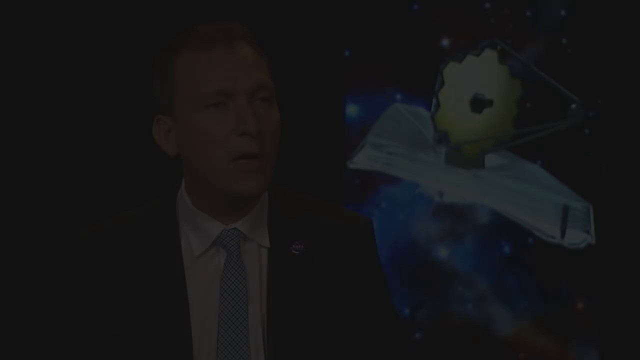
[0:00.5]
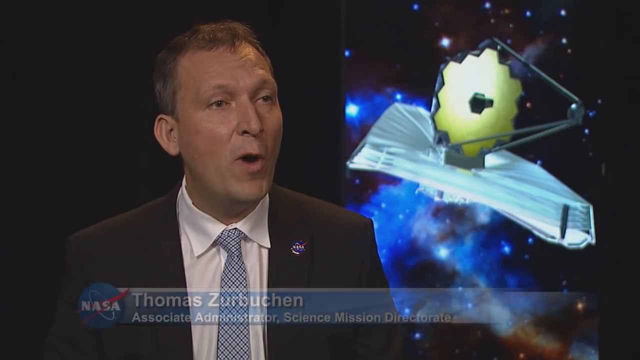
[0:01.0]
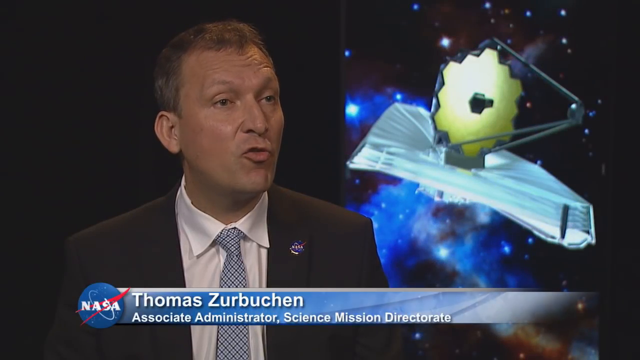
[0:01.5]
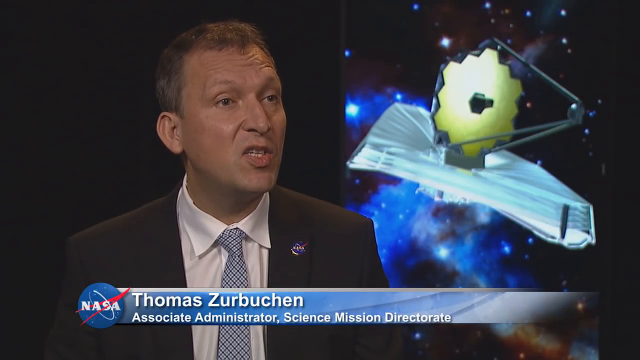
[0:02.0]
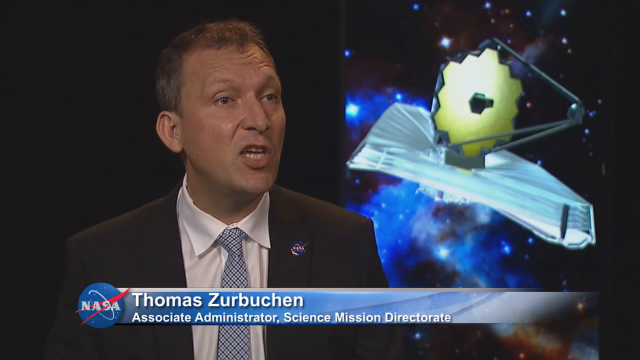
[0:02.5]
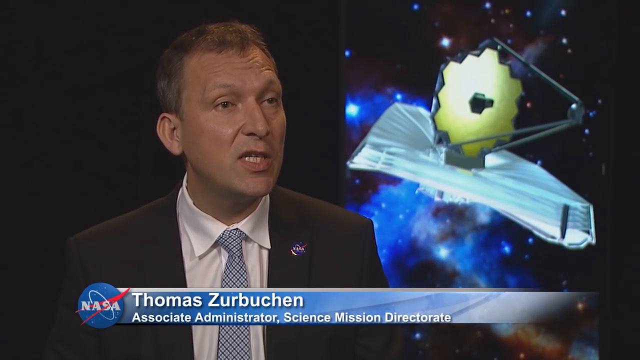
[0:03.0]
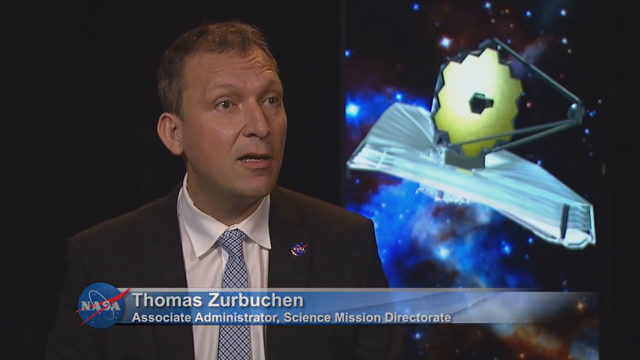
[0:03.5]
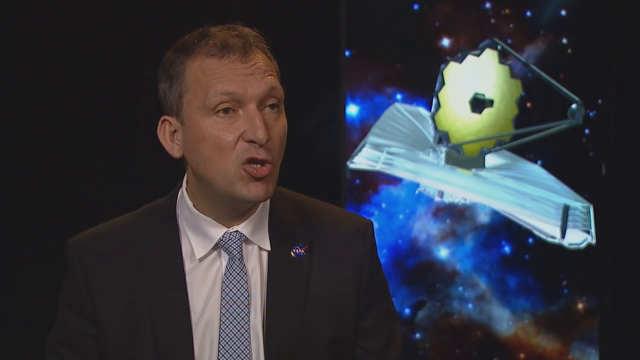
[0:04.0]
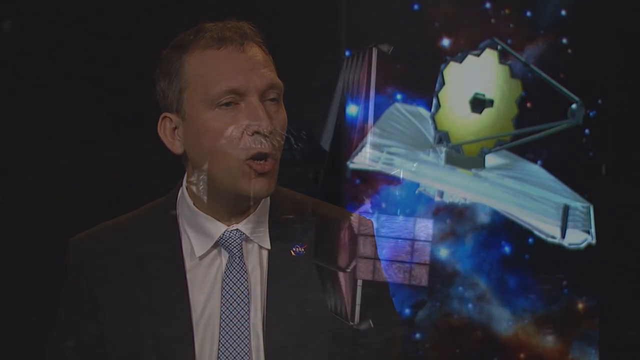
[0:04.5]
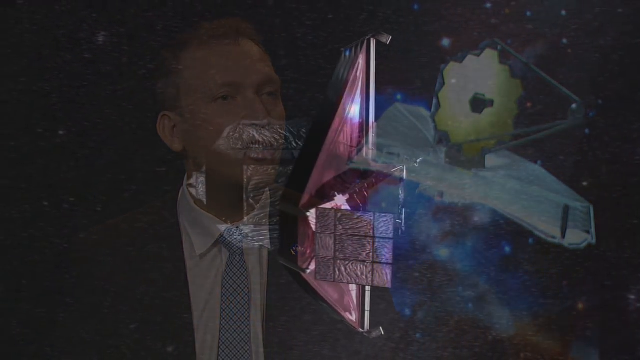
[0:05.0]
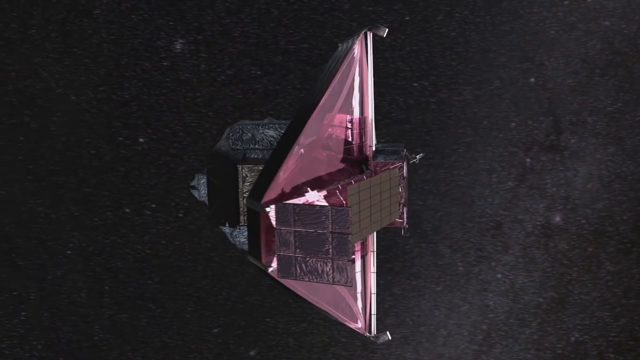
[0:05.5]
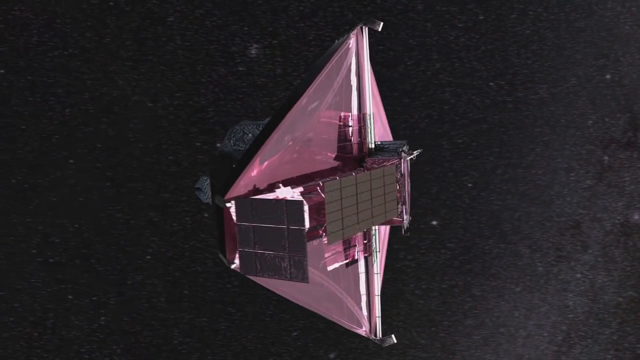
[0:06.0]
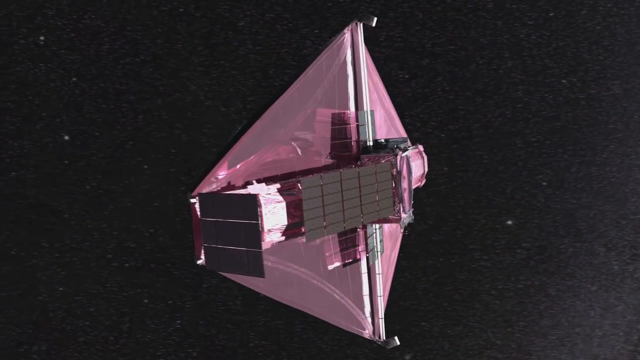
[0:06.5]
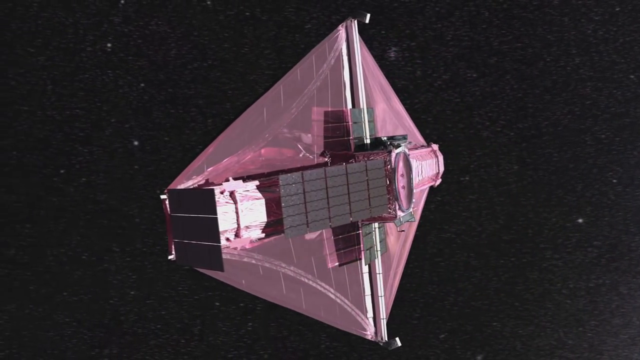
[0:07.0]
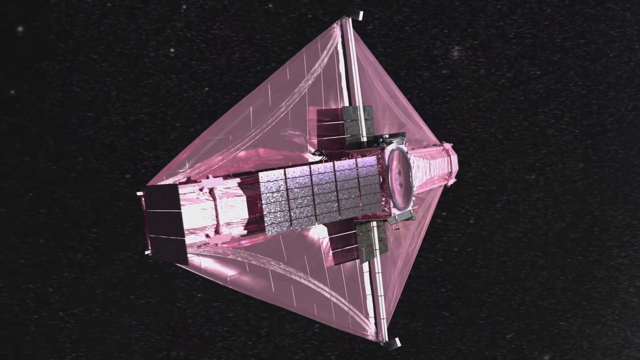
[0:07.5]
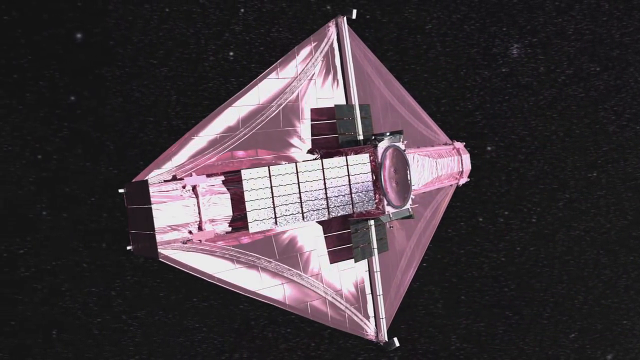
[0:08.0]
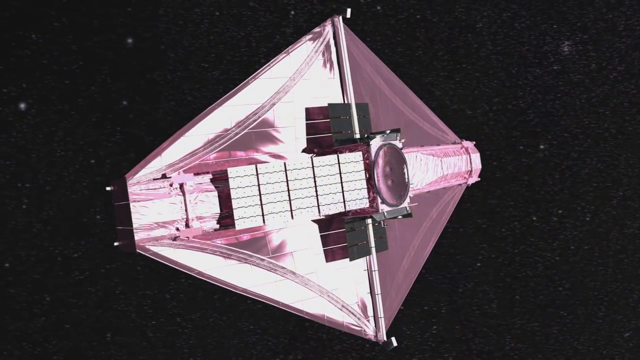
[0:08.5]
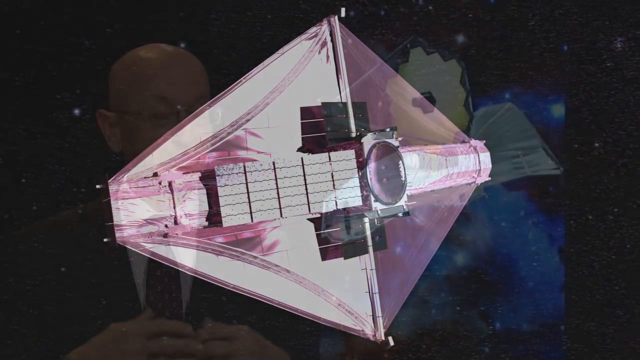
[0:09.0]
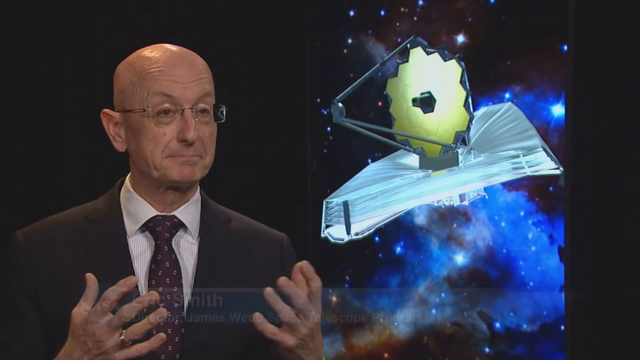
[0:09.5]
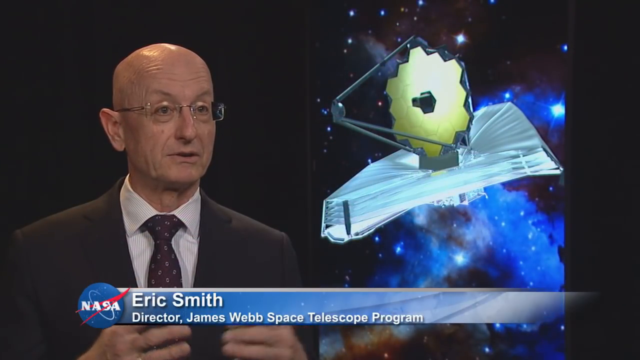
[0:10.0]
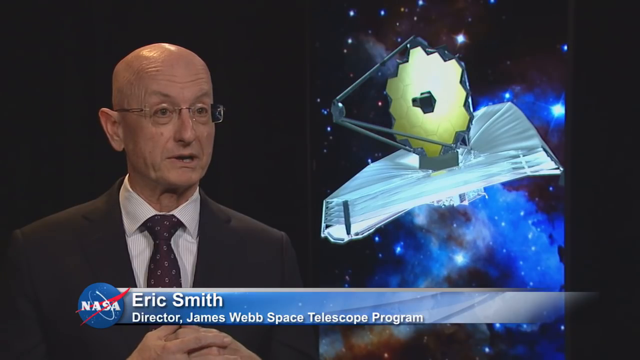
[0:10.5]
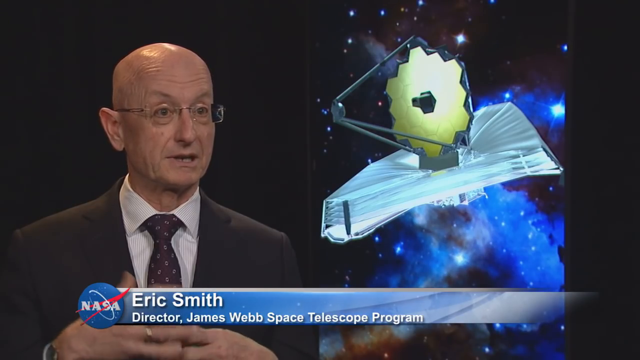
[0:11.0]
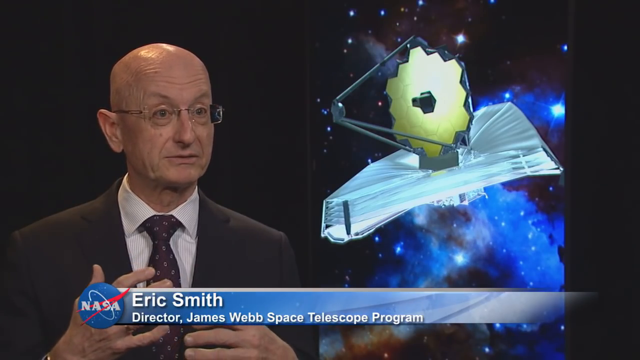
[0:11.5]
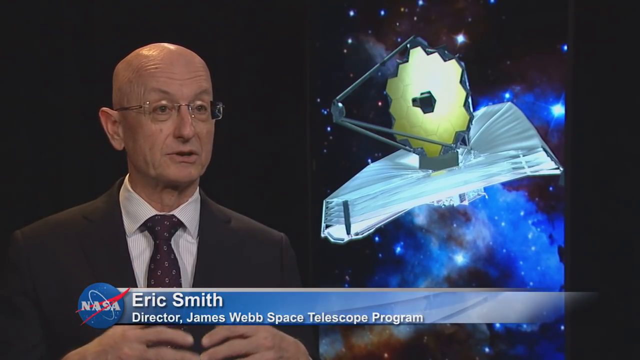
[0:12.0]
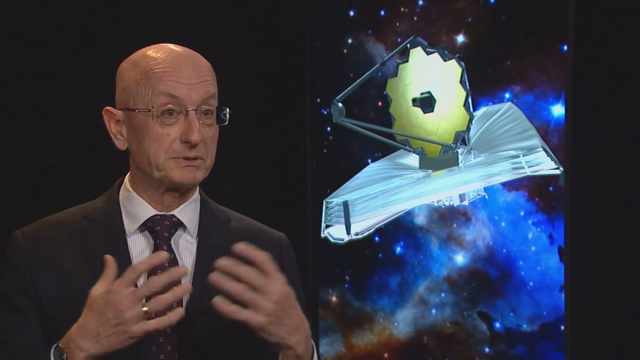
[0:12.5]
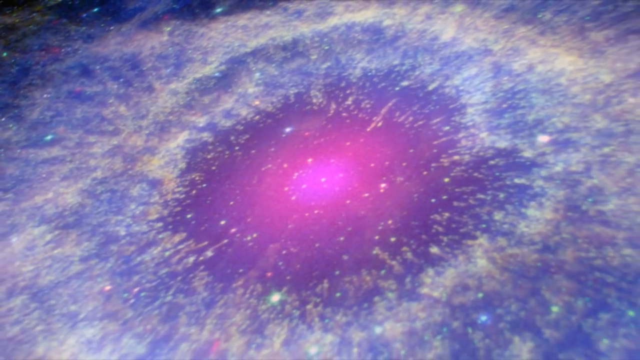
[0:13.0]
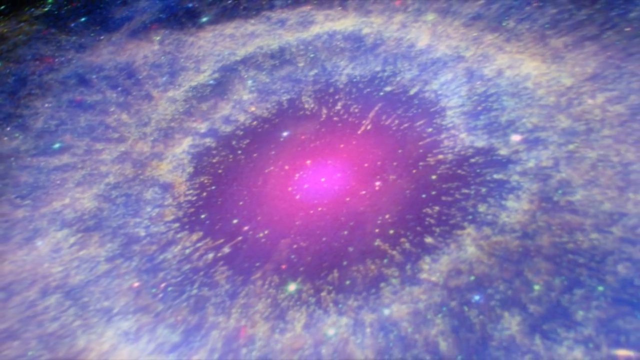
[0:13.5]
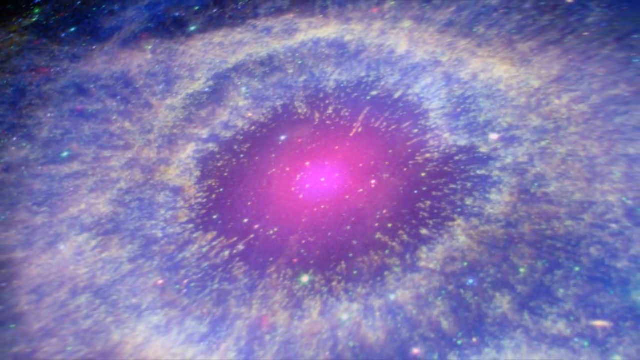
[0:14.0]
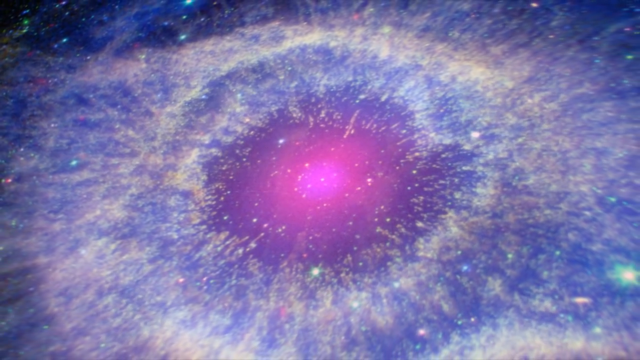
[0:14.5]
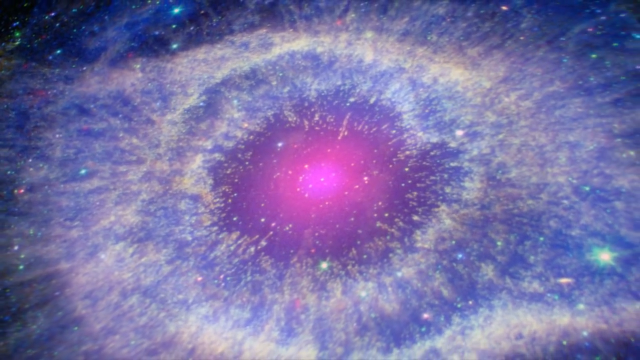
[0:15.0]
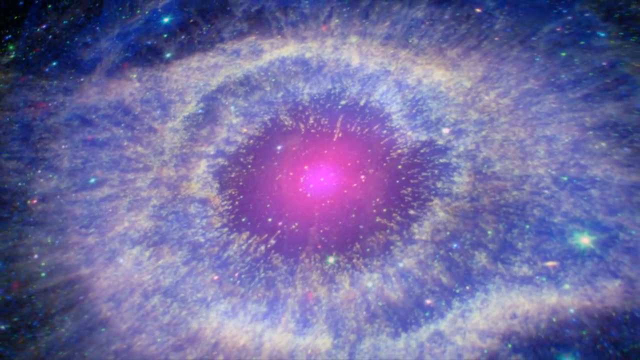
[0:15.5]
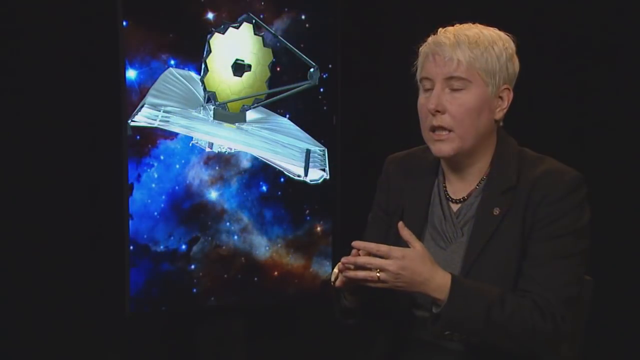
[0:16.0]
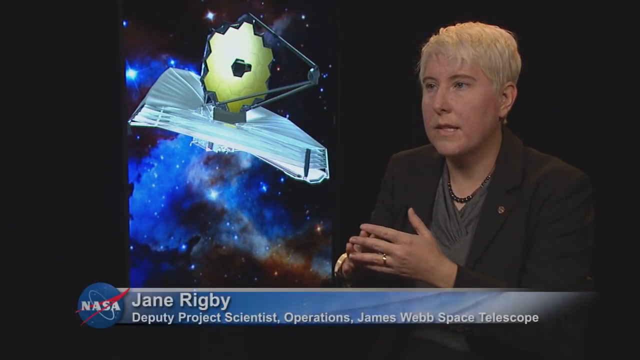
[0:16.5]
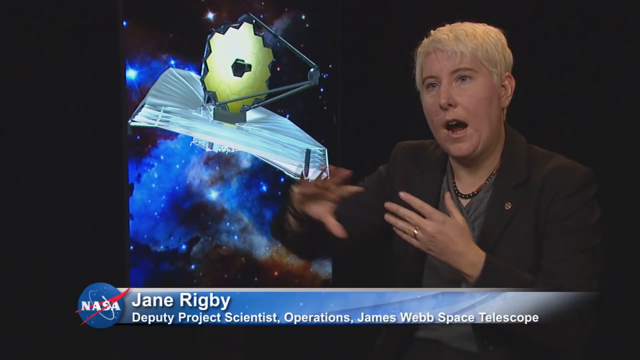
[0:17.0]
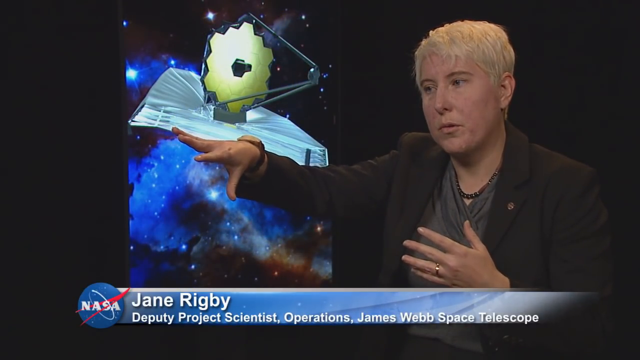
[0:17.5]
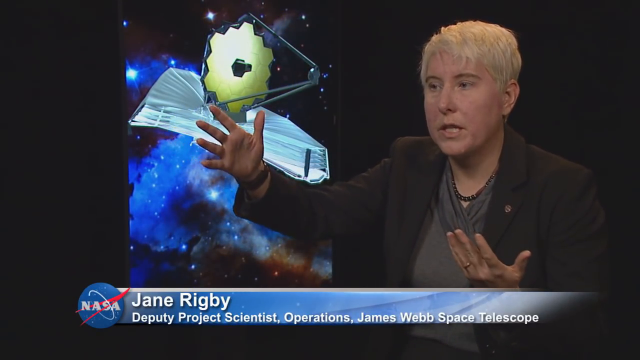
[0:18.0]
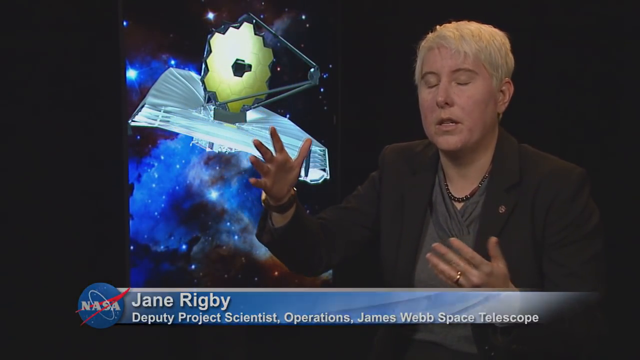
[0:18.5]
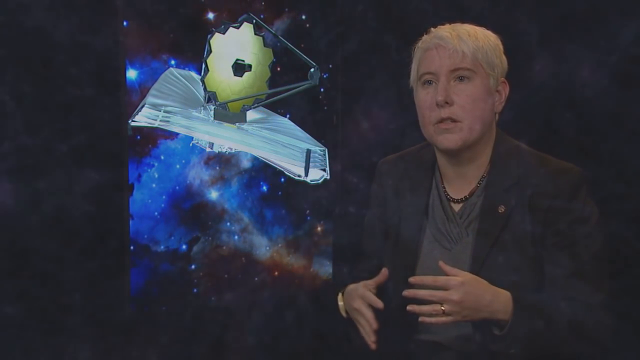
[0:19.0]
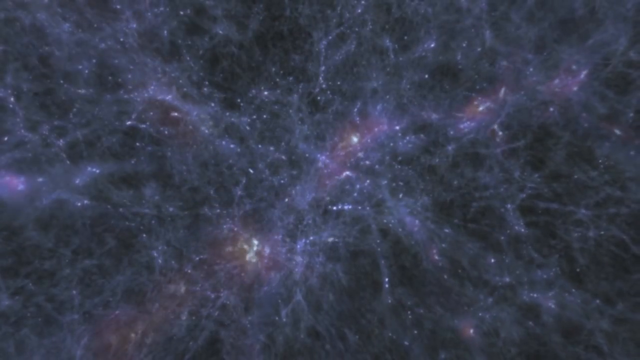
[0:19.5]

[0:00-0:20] A man in a black suit, a white shirt, and a blue tie, with short brown hair, stands to the left of an image that appears to be a satellite. Outer space is visible behind the image, and there is a circular item with rods coming from it; underneath this part is a solid white material. The man talks, and then an up-close image of a diamond-shaped red item appears. The screen flashes to a man with no hair who wears a brown suit with a brown tie, a white shirt, and glasses. An image of a cosmic atmospheric condition follows. A woman named Jane Rigby, with blonde hair and wearing a brown jacket over a gray shirt, speaks about the satellite image as well.